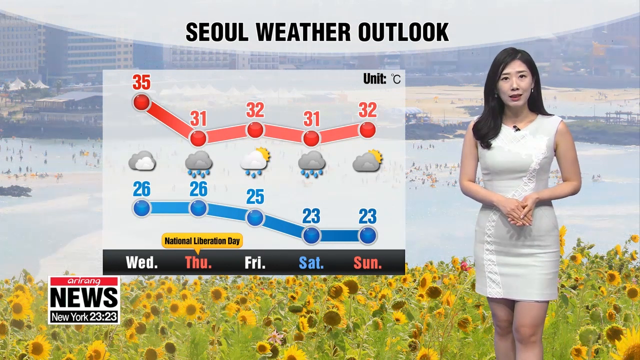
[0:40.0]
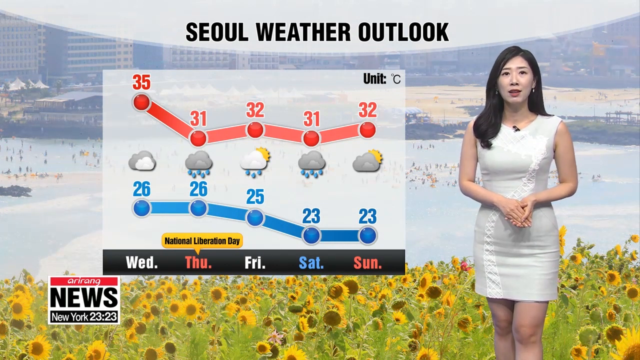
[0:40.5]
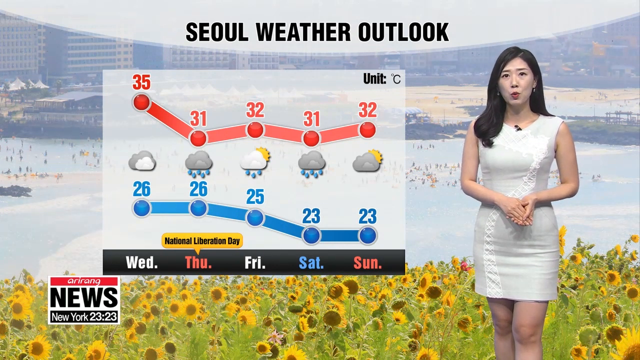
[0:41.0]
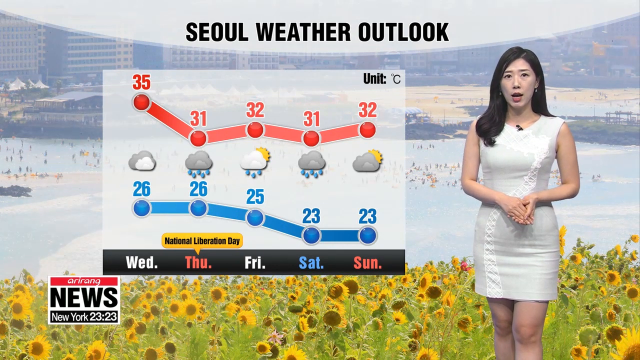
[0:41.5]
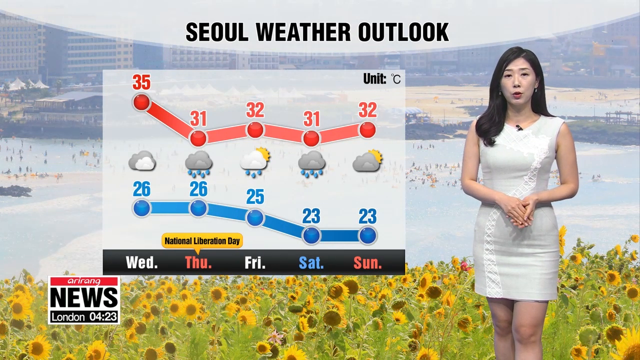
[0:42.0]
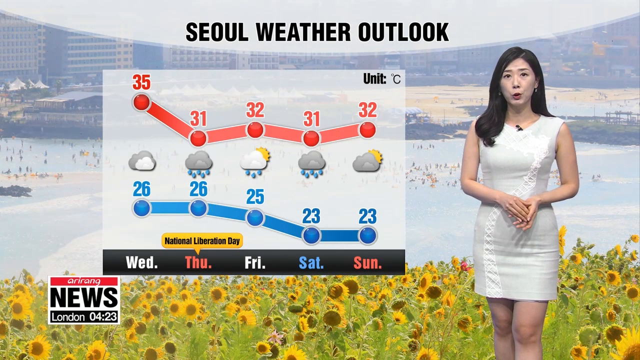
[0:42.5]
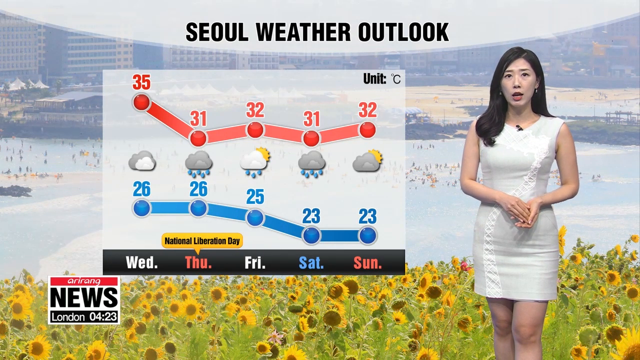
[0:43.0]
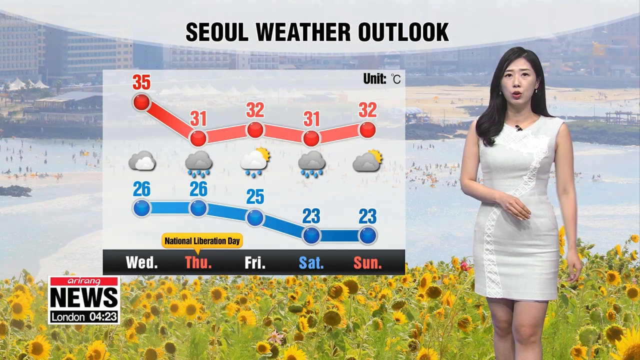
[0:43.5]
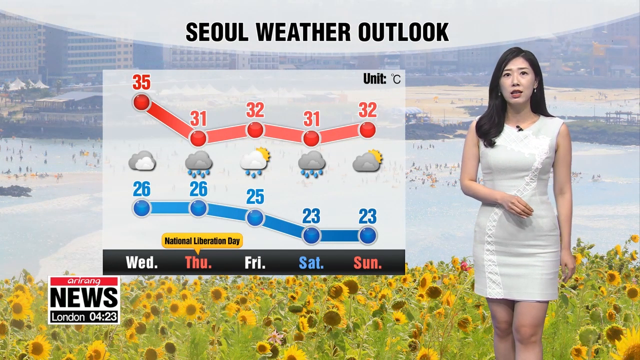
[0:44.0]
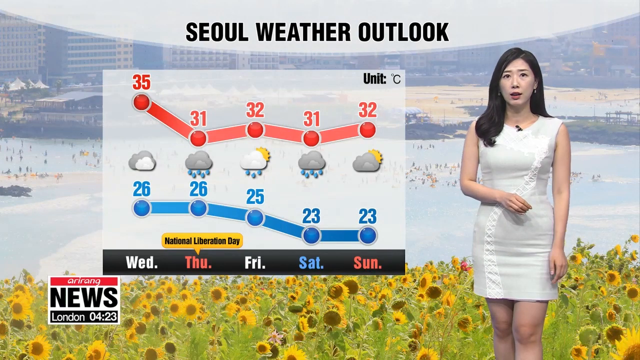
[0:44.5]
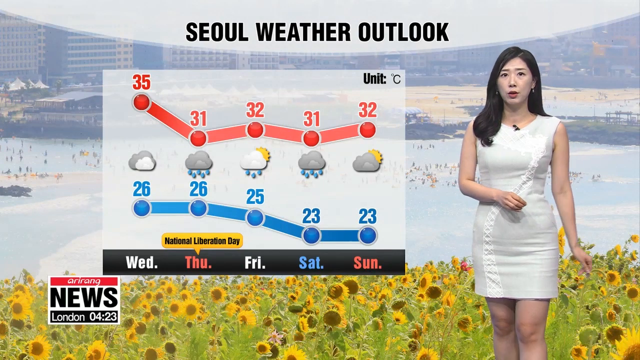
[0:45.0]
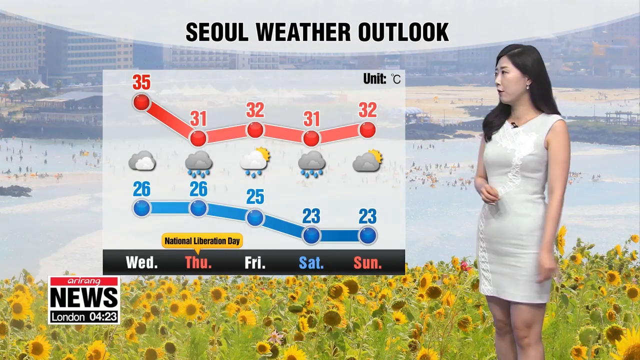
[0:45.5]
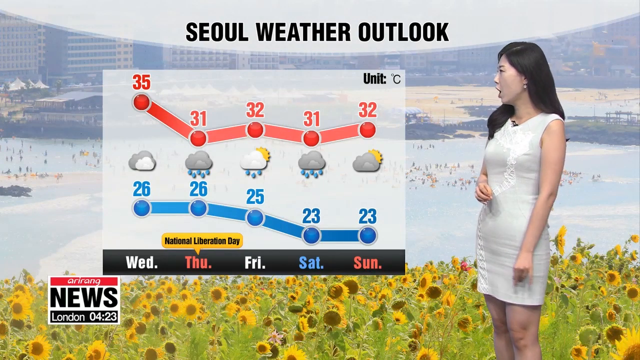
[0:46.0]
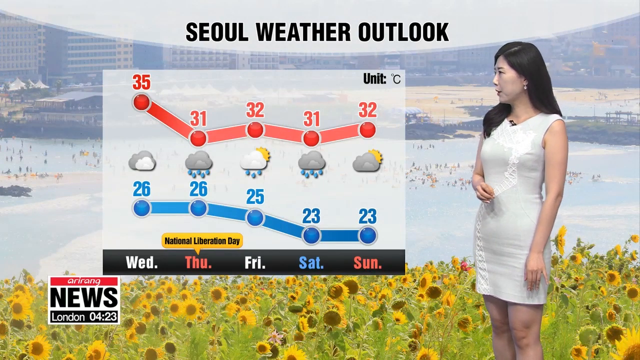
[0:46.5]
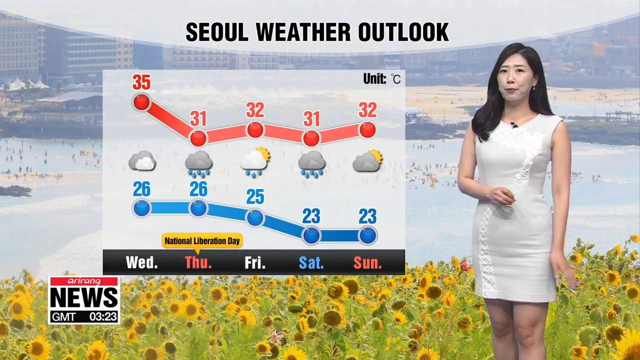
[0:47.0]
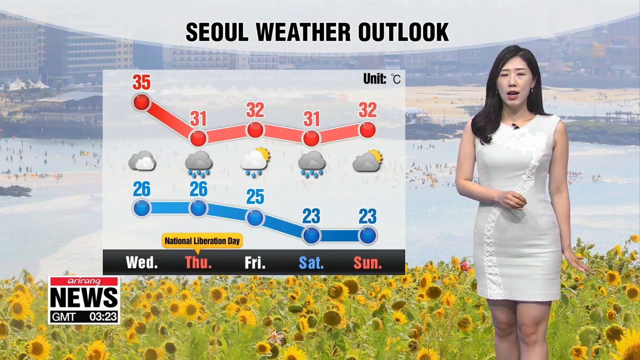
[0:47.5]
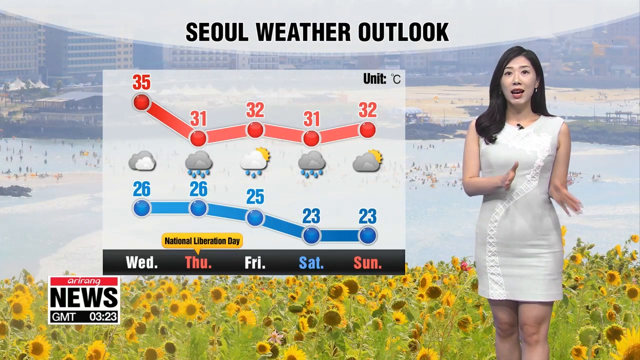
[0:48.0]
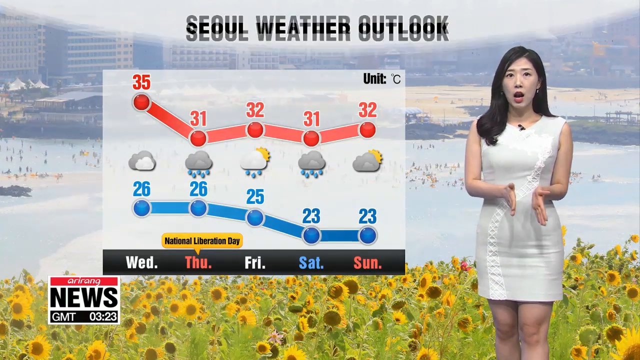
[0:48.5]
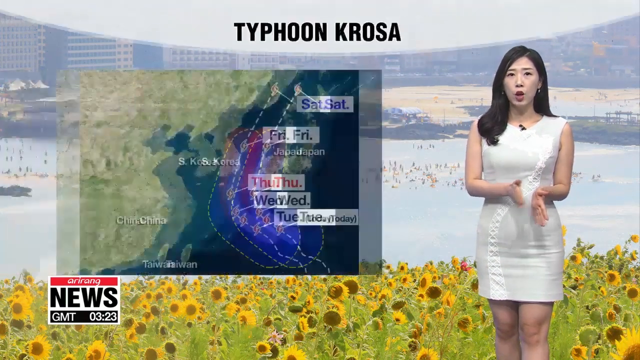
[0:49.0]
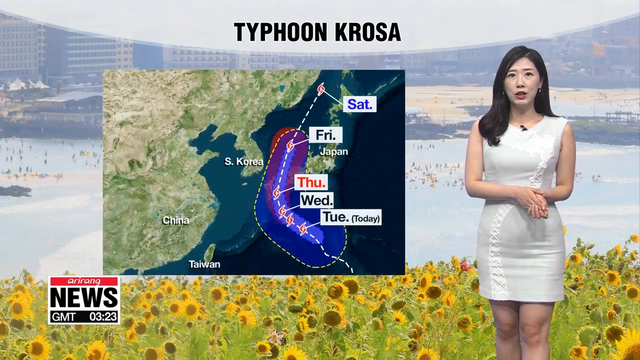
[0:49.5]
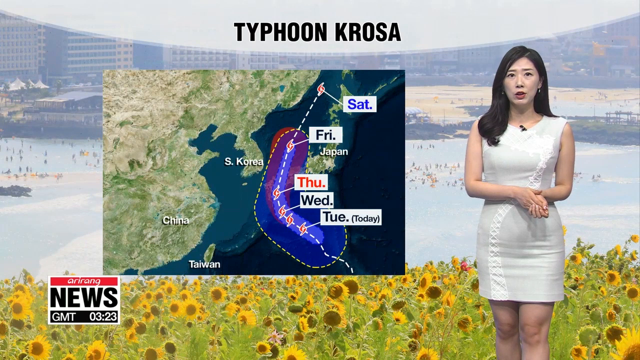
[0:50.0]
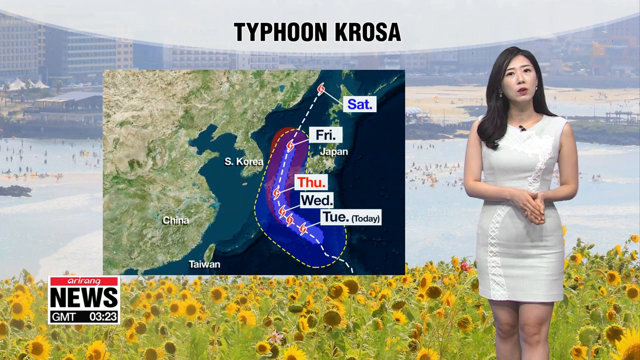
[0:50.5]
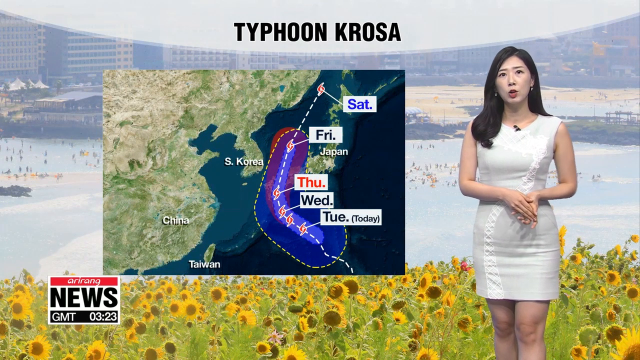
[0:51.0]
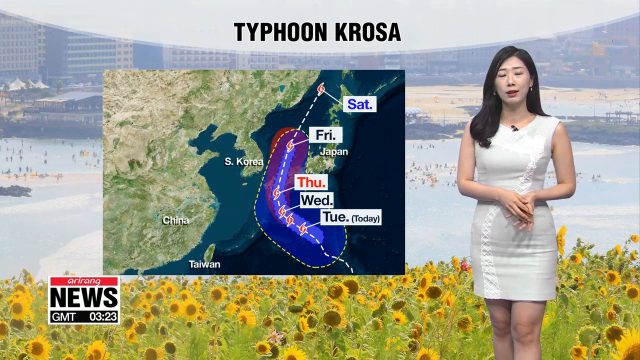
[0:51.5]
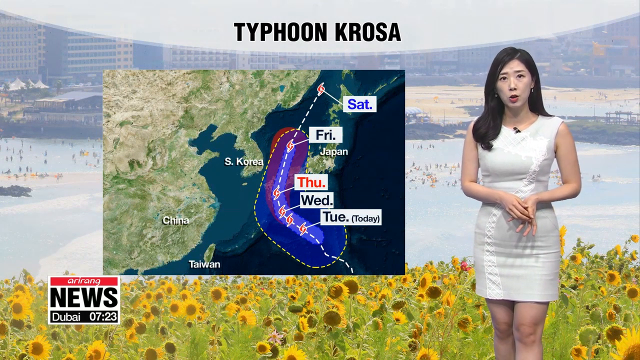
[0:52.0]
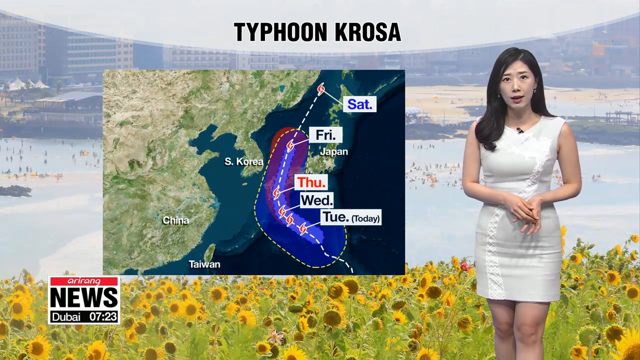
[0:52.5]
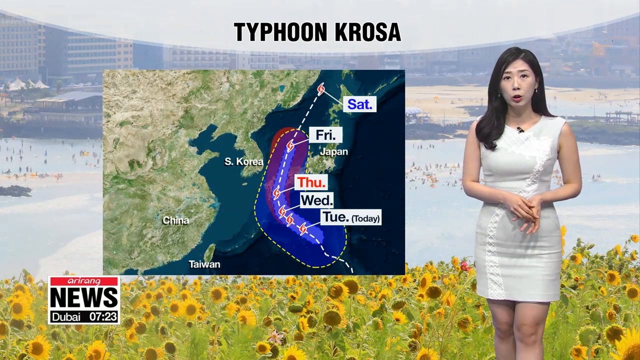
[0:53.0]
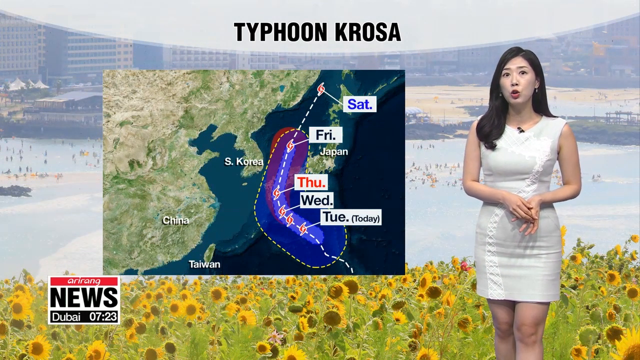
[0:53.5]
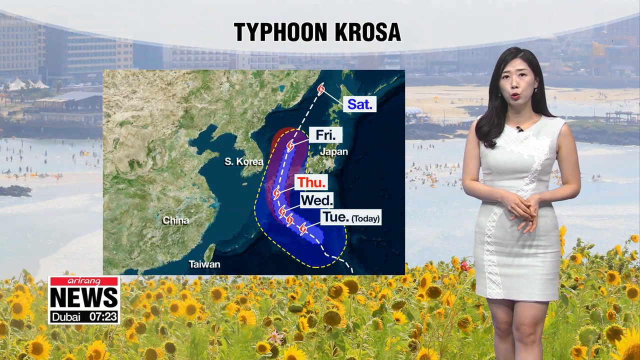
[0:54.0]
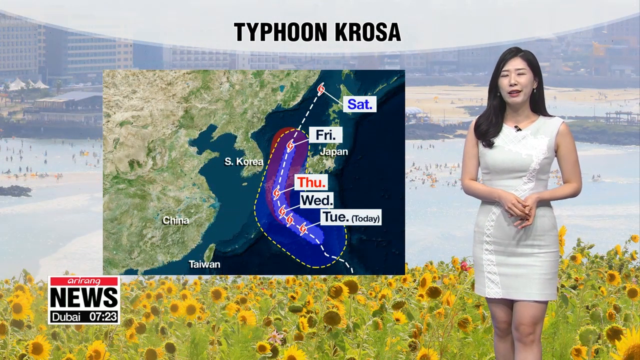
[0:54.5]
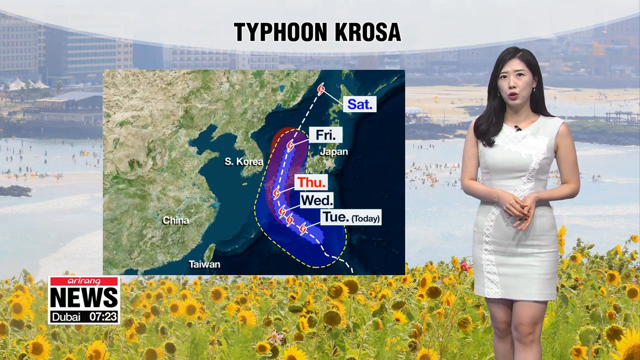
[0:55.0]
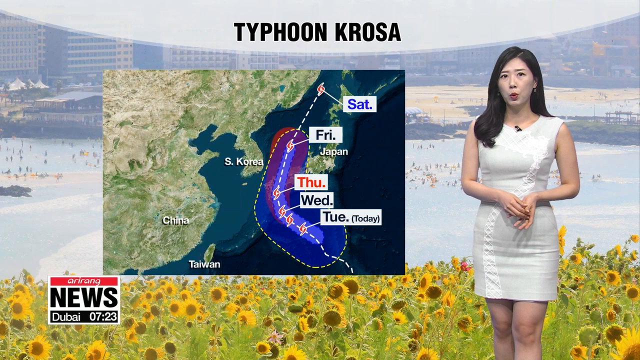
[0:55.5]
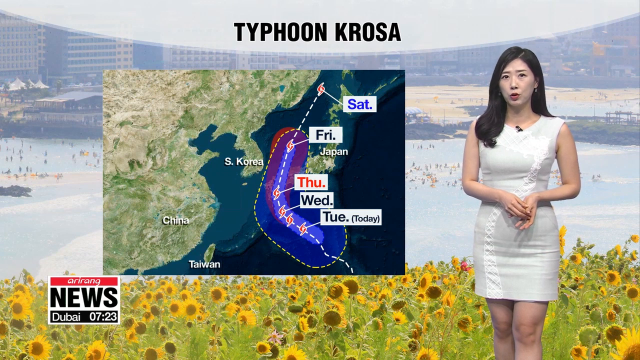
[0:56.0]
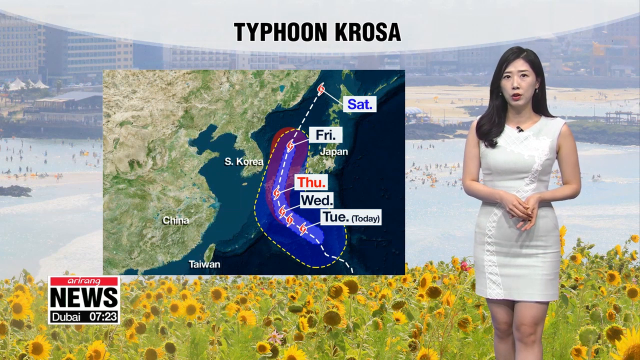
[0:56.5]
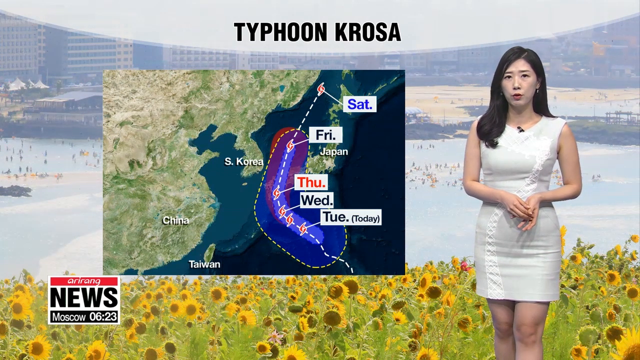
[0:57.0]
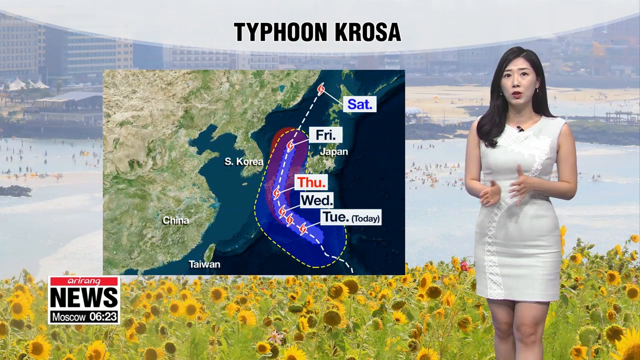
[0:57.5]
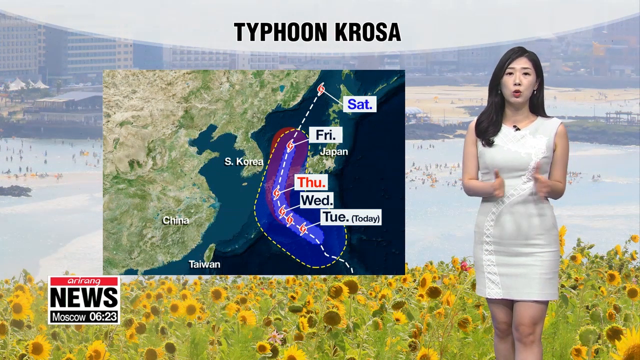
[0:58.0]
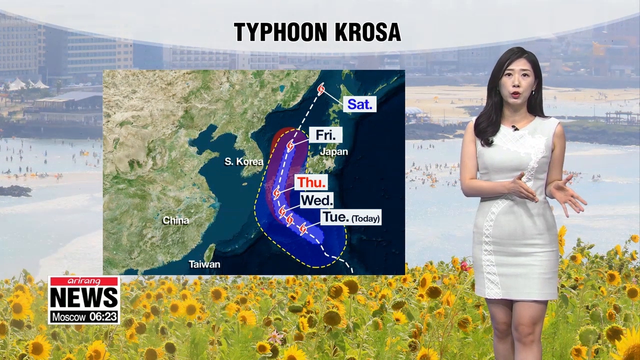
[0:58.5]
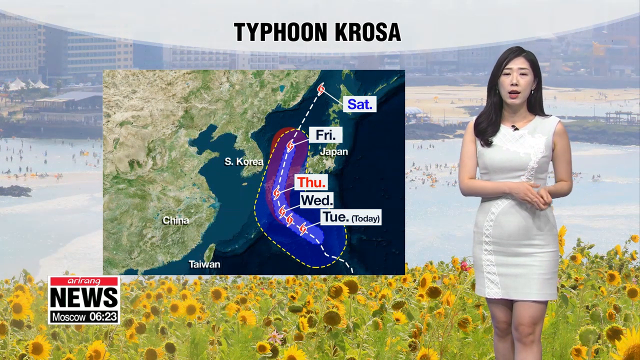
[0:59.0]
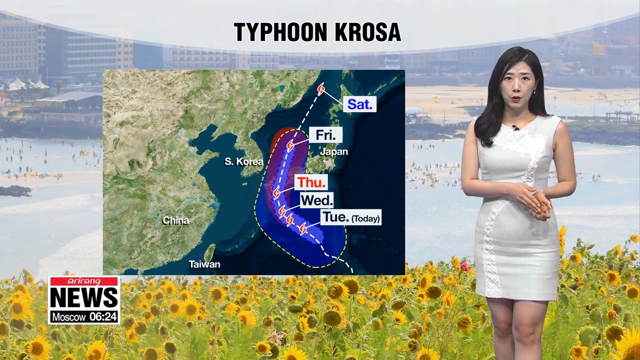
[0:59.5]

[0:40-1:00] The background photo remains the same. The upper white semicircle text bubble now reads "Sol Weather Outlook". The centered image is a temperature graph whose lower bar reads "Wed, Thu, Fri, Sat, Sun". On the left-hand side, the red line reads 35 degrees directly above Wed, drops to 31 degrees above Thu, moves to 32 degrees above Fri, 31 degrees above Sat, and 32 degrees above Sun. The low temperatures are shown by a blue graph. Between the red and blue graphs are various cloud formations indicating how cloudy or rainy it might be: mostly partly cloudy on Wed, raining on Thu, some sun and rain on Fri, rain on Sat, and mostly cloudy with some sun on Sun. The blue line begins at 26 degrees over Wed, stays at 26 over Thu, moves to 25 over Fri, drops to 23 over Sat, and remains straight to Sun, also at 23.